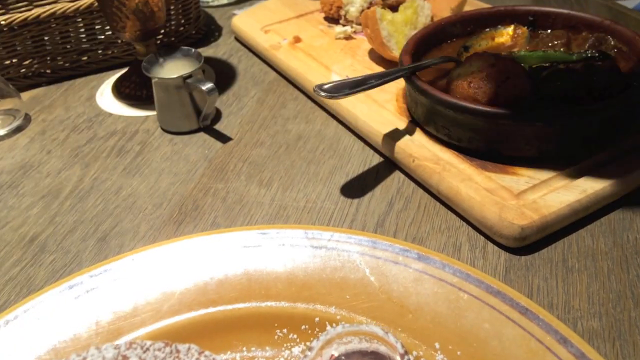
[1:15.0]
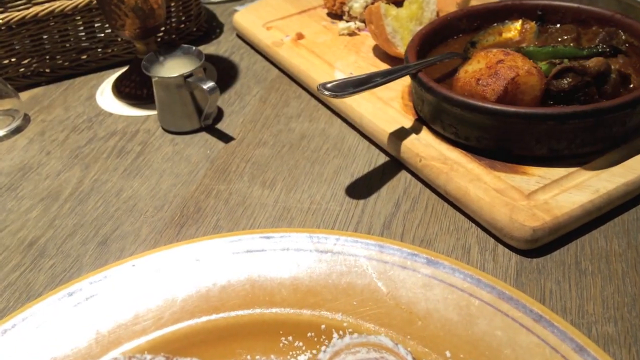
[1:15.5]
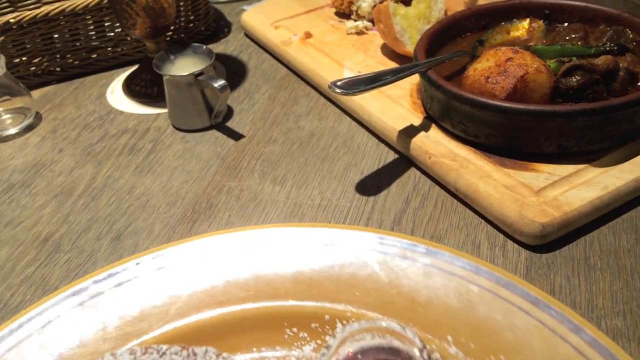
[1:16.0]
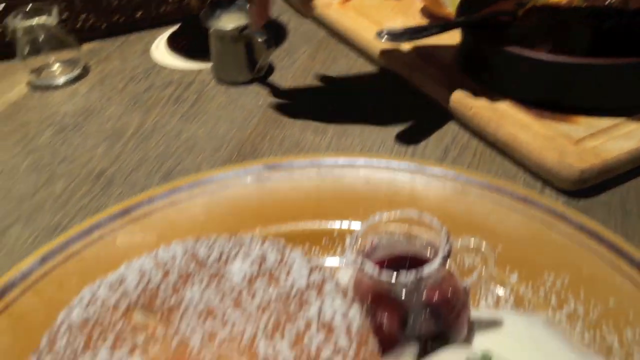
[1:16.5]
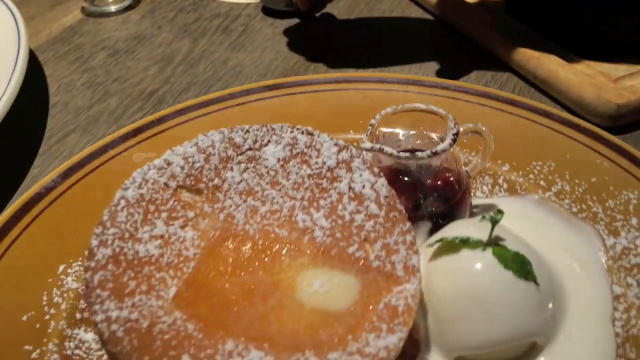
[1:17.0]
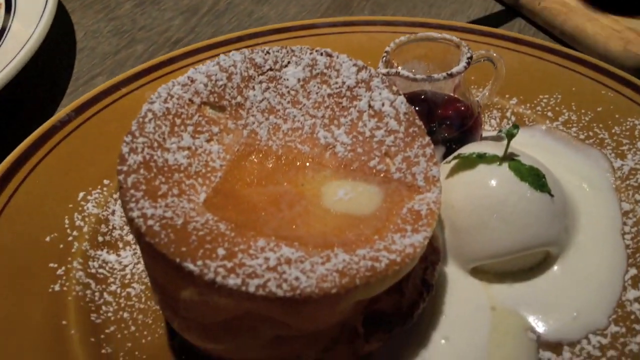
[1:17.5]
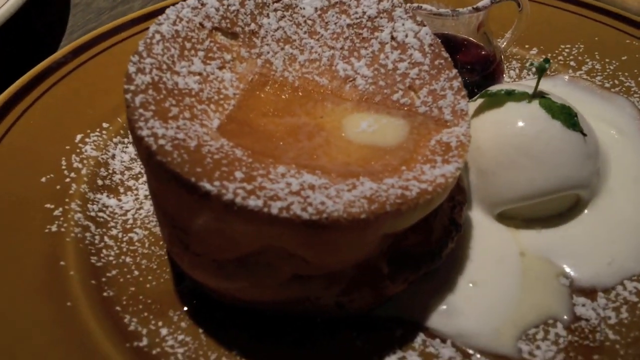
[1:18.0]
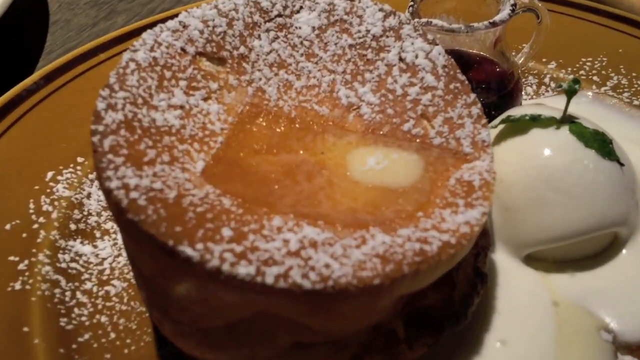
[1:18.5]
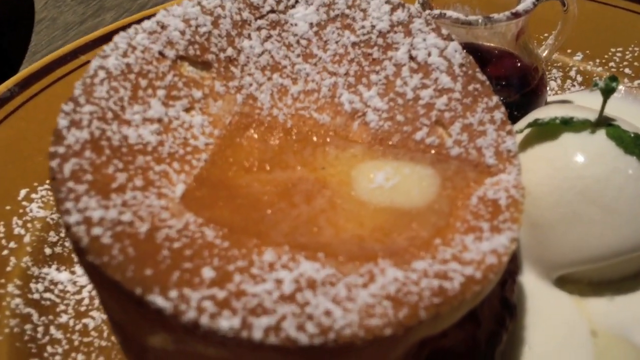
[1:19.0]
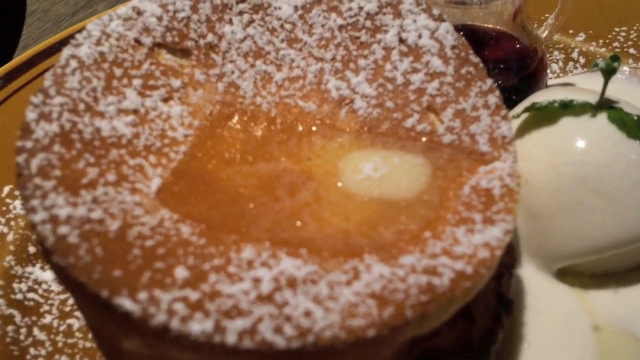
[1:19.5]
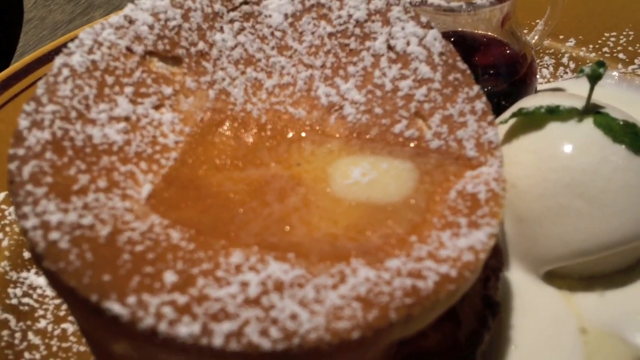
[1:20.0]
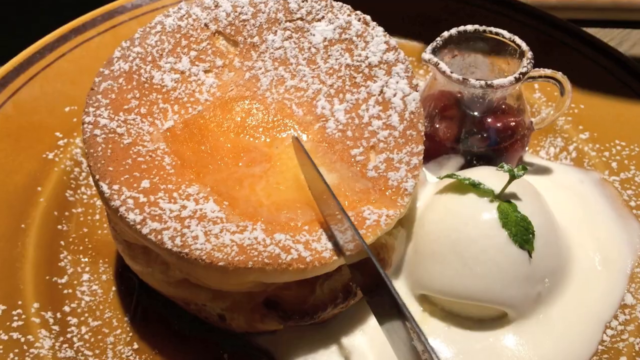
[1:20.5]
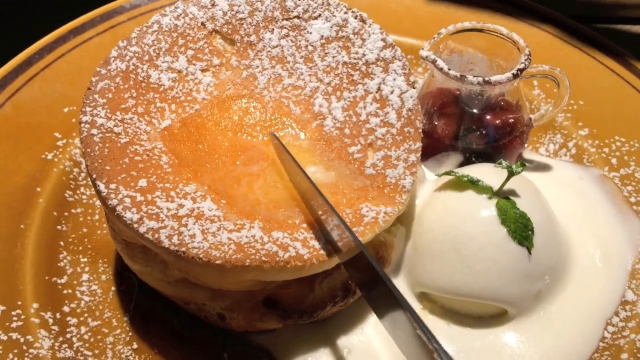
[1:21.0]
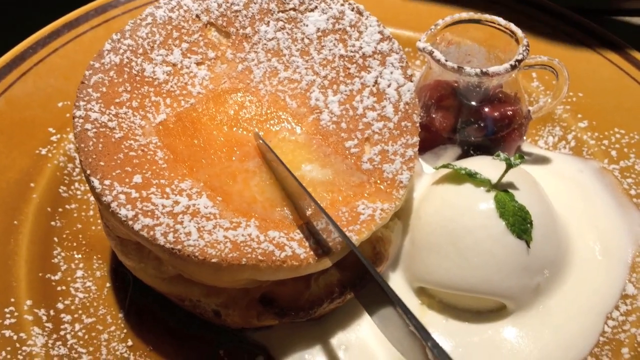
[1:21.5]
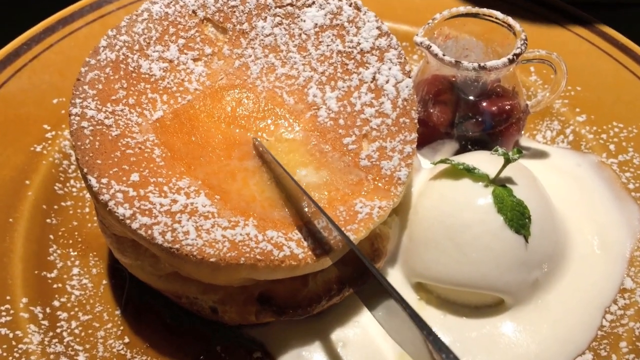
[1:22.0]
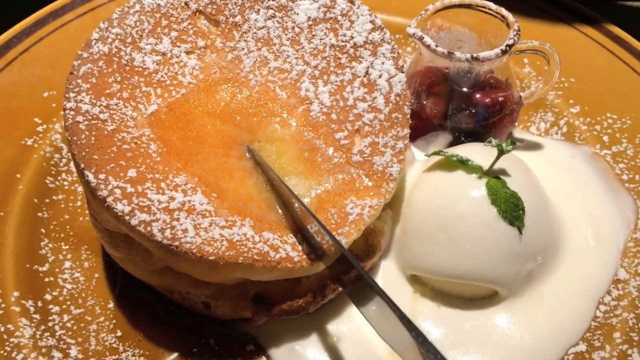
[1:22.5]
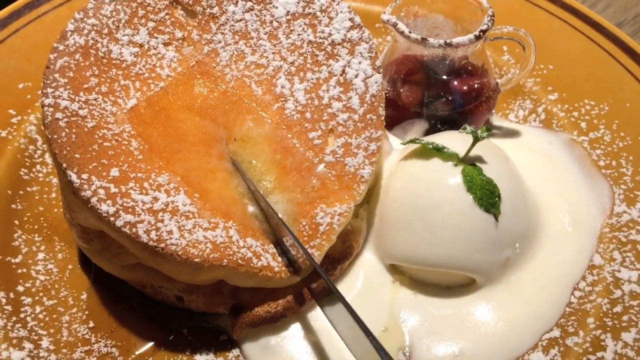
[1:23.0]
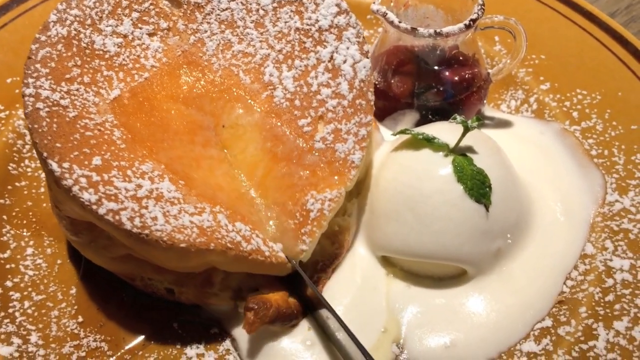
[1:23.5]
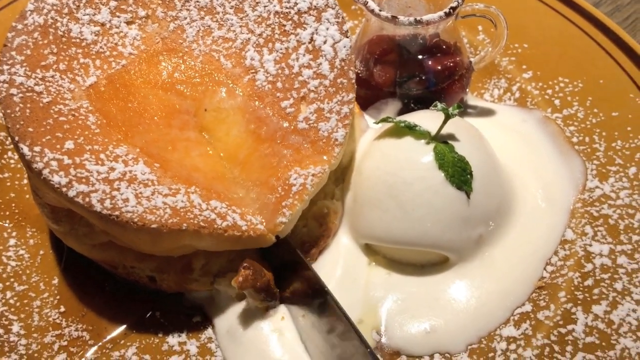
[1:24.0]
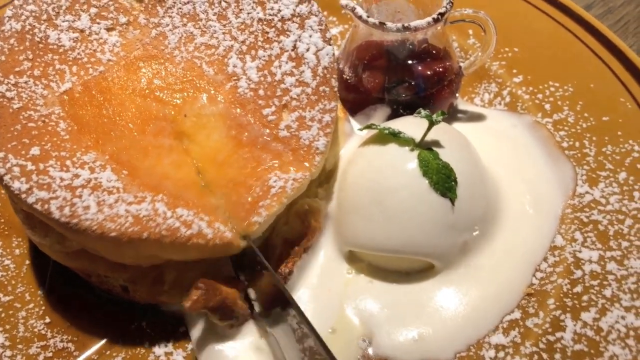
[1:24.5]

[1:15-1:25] The scene focuses solely on the dessert plate, with the pat of butter almost but not completely melted. The scene then changes to a few minutes later, when the butter has completely melted. It zooms in on the person cutting into the center of the pastry with a knife, and the butter drips into the ice cream as it all kind of comes together. The powdered sugar is very melted into the butter. The puff pastry looks like a pancake and a waffle mixed together and is about two inches tall. Only the knife going into the pastry is shown, with nothing yet on the ice cream or syrup. The close-up shows the varied textures on the plate.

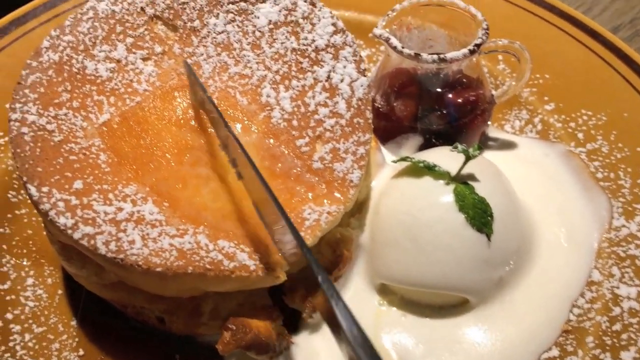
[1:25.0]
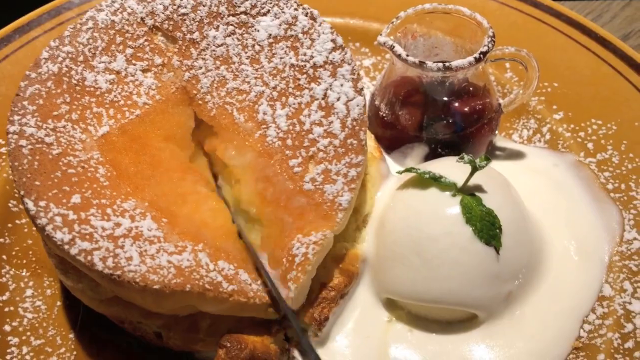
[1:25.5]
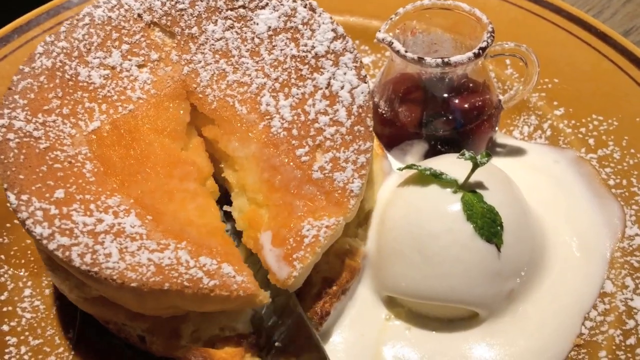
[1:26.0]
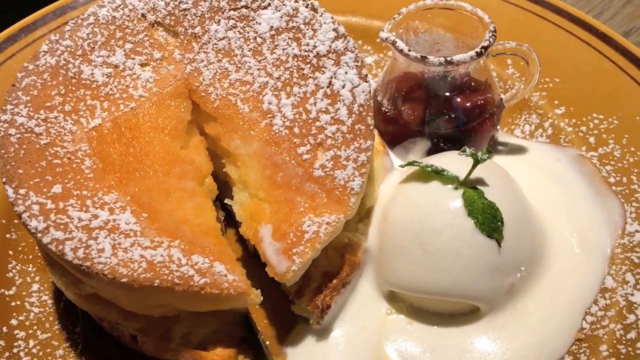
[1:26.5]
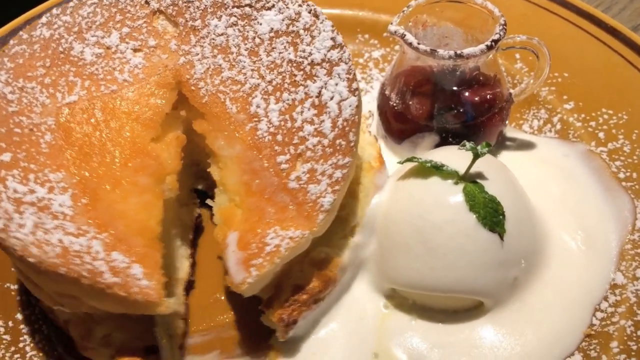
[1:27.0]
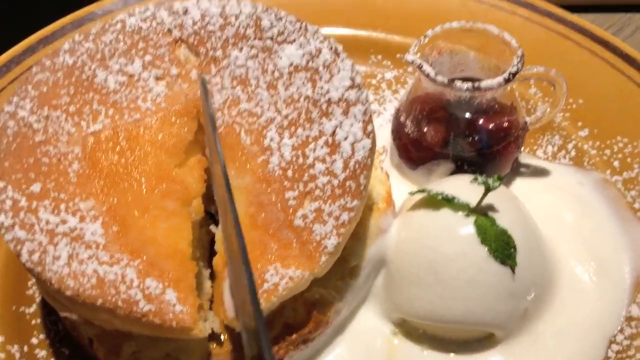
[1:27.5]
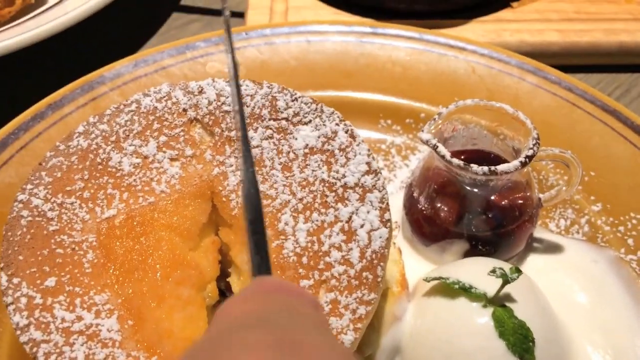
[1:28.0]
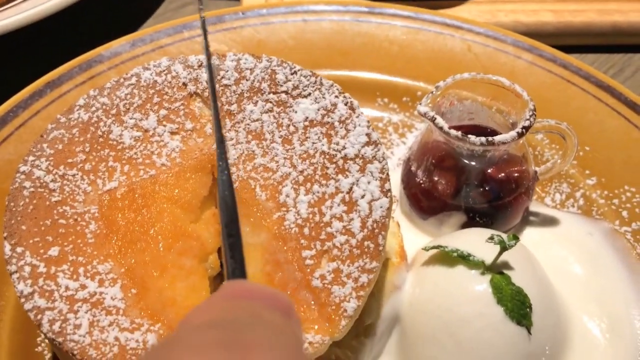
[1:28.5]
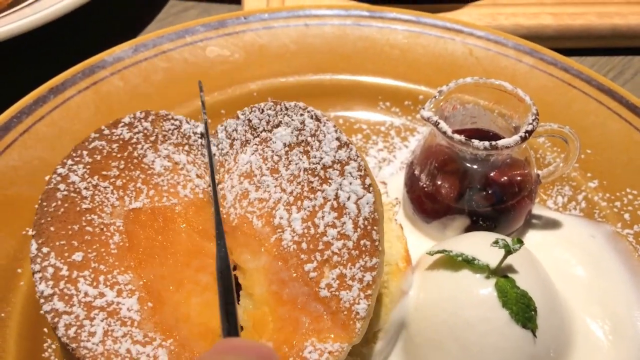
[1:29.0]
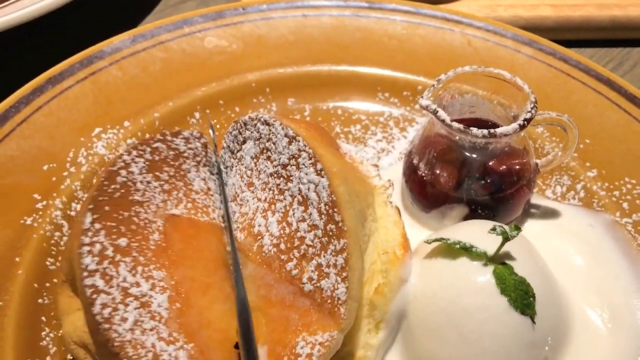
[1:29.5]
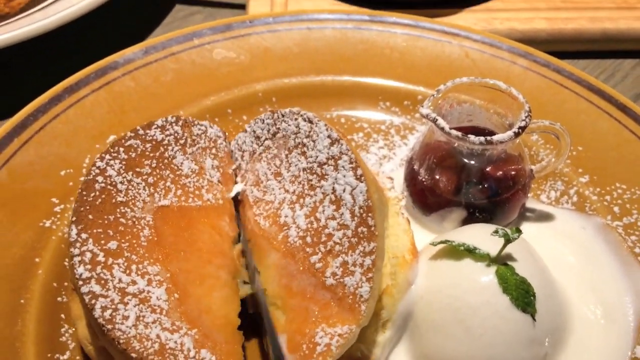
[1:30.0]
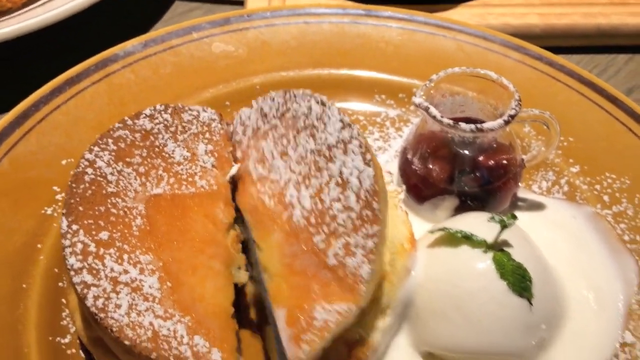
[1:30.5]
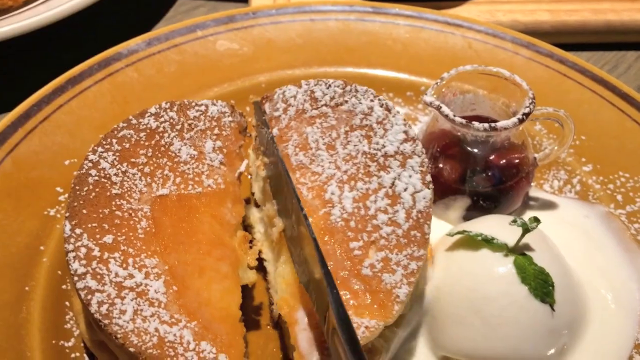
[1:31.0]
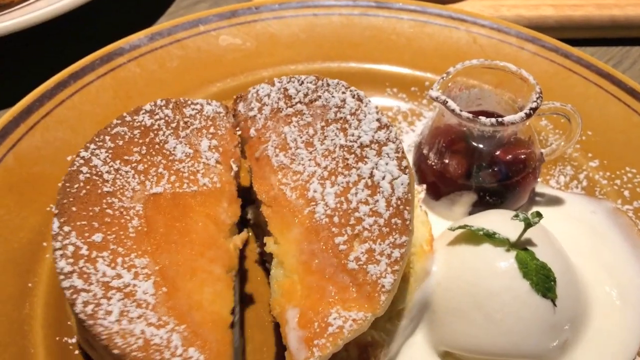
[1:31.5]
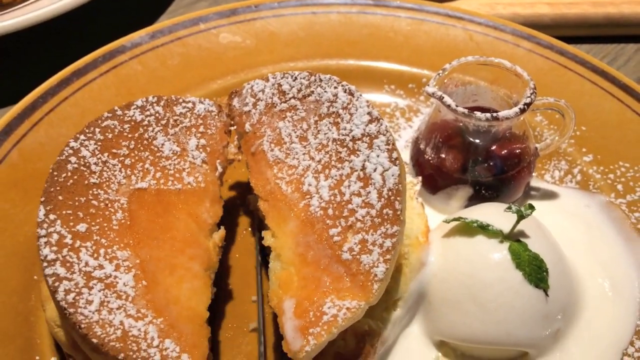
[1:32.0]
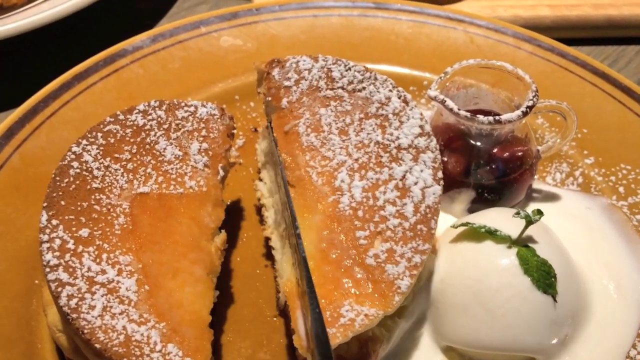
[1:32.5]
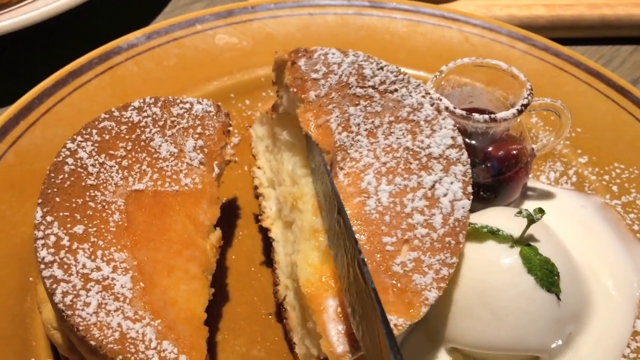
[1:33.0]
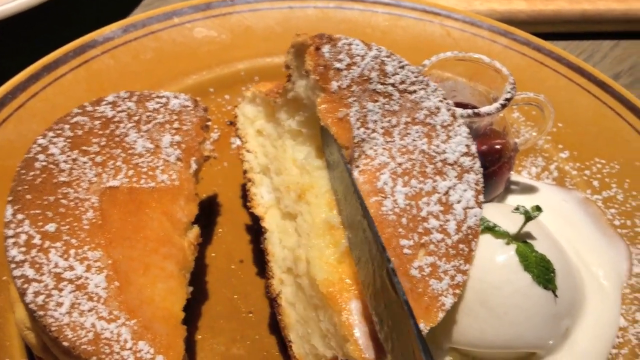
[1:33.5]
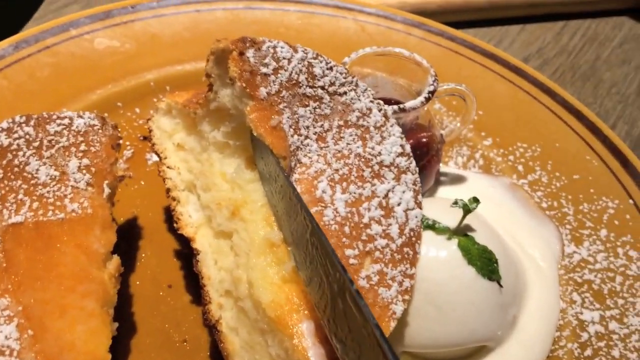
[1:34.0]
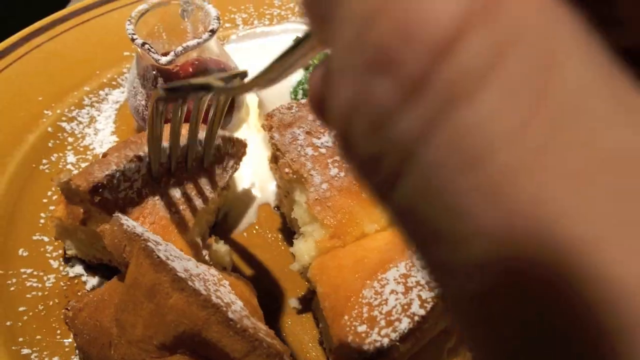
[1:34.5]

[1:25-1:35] The shot stays on the dessert as the person cuts the pastry in half with a knife: one pass cuts into the middle, and a second pass splits it into two halves. The pastry looked like two layers of pancake but is actually one large pastry, with a yellow, cake-like buttery inside and a melted yet crunchy frosting layer on top. The knife is a regular metal knife with syrup and liquid on it, suggesting liquid from the pat of butter is dripping through the pastry. The scoop of white ice cream, or some kind of ice cream with a white syrup on top, is still there. The powdered sugar remains a predominant feature of the plate. Finally, he uses a fork to take a bite-sized piece of the cake and dips it a little in the vanilla ice cream.